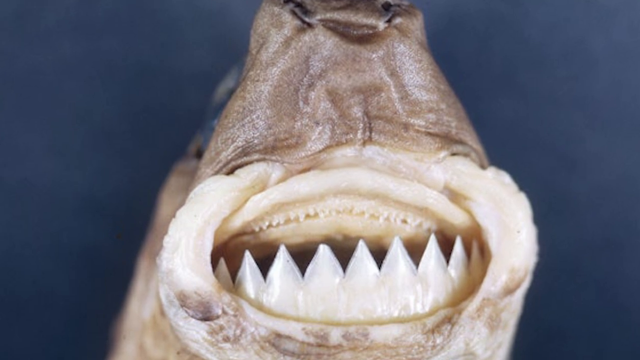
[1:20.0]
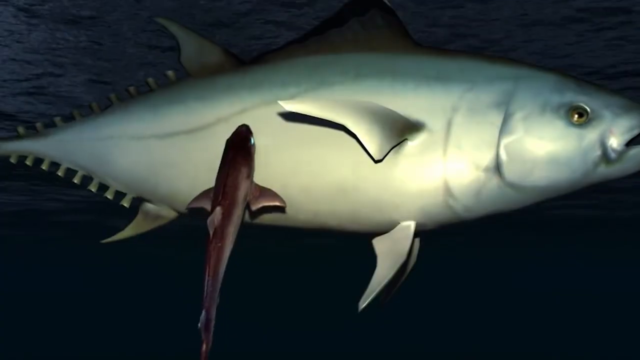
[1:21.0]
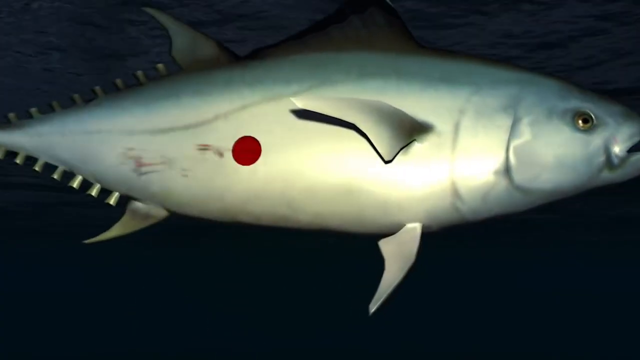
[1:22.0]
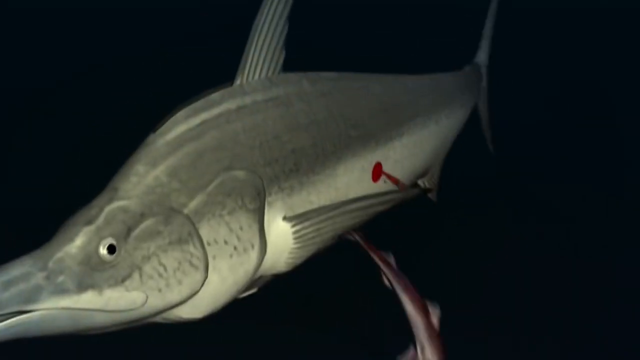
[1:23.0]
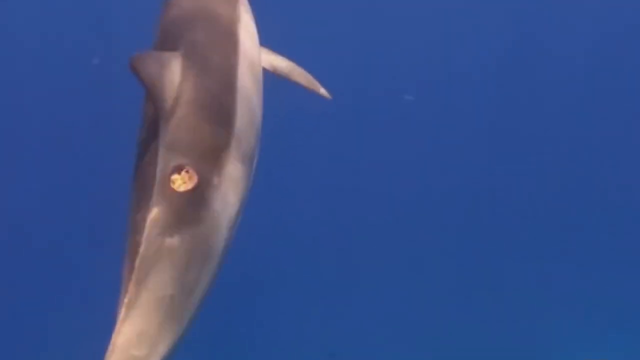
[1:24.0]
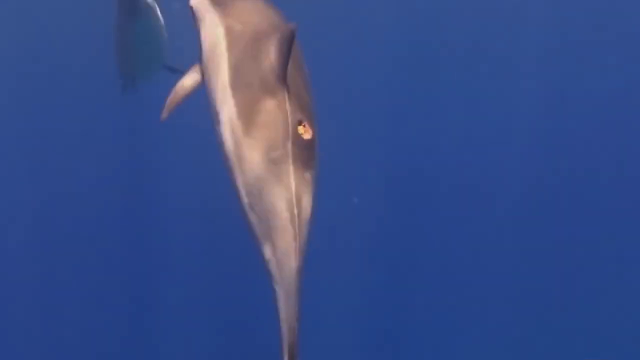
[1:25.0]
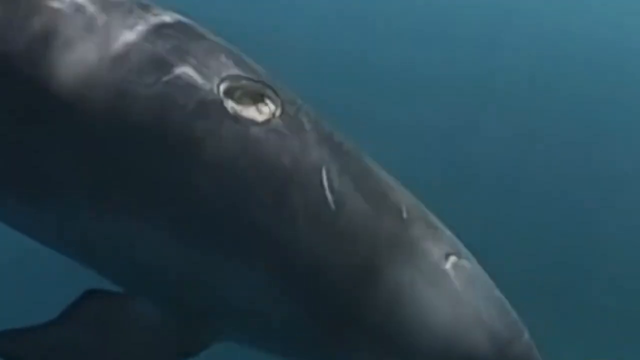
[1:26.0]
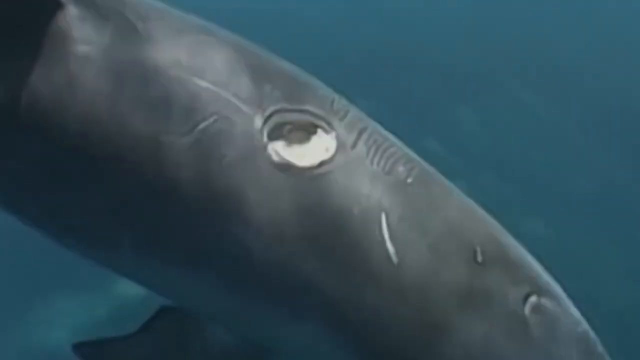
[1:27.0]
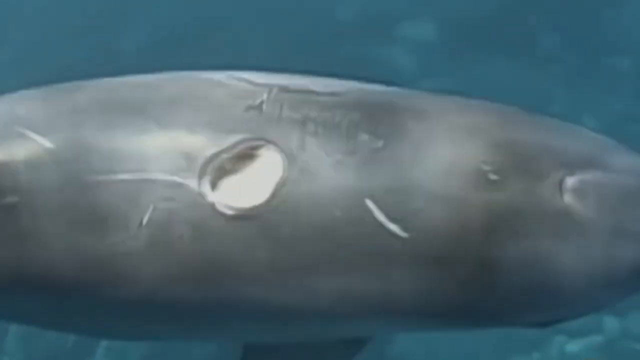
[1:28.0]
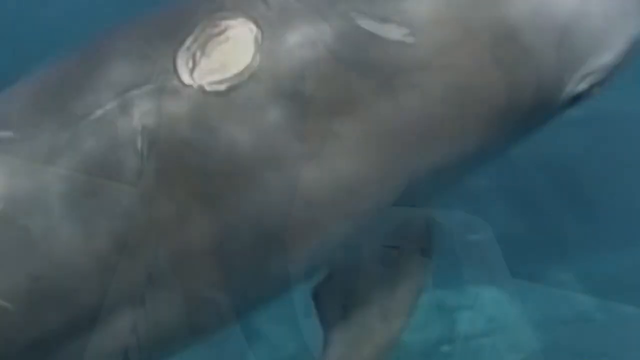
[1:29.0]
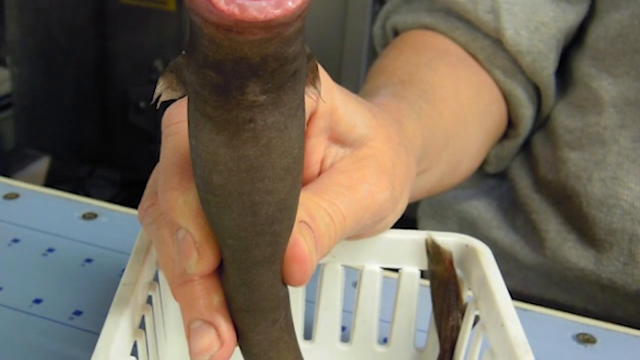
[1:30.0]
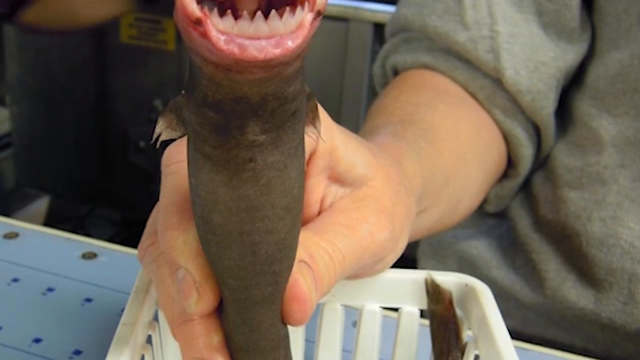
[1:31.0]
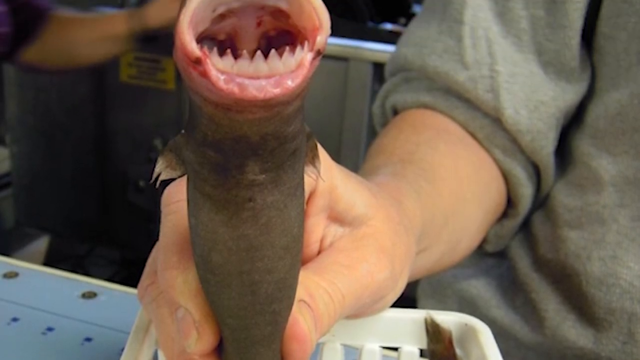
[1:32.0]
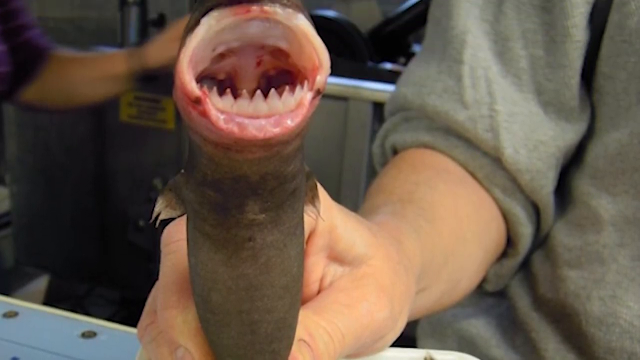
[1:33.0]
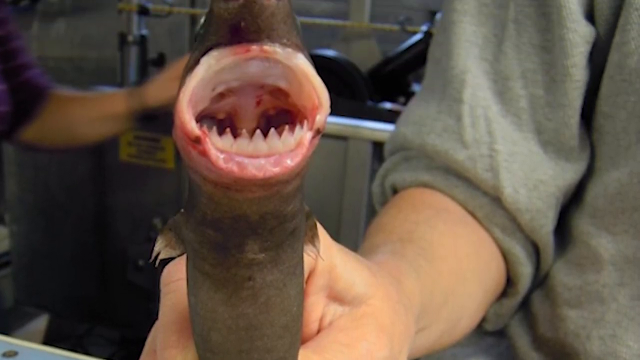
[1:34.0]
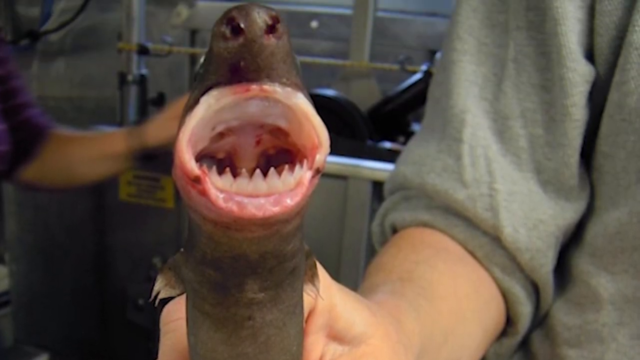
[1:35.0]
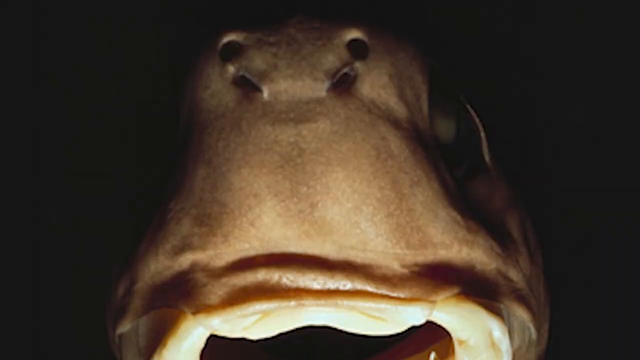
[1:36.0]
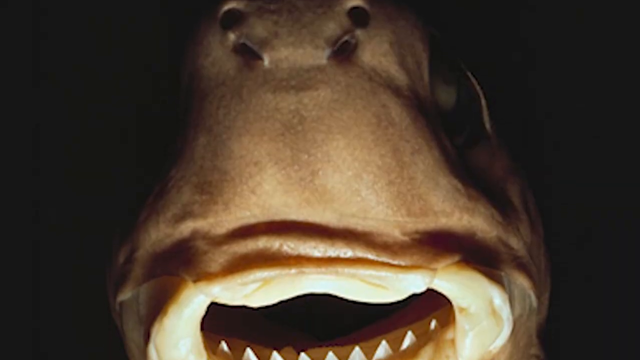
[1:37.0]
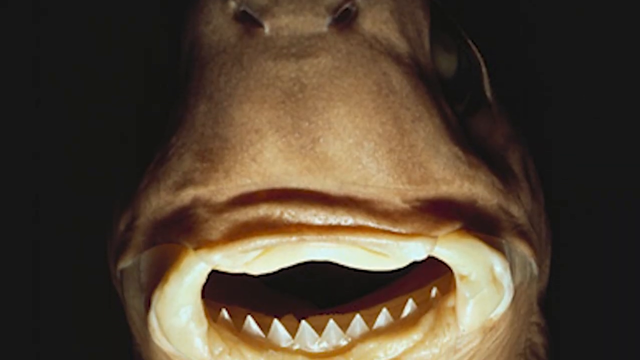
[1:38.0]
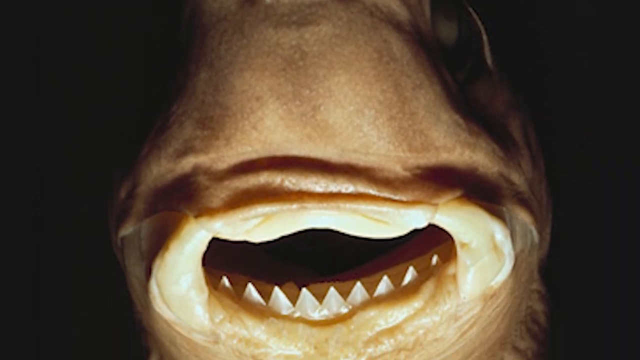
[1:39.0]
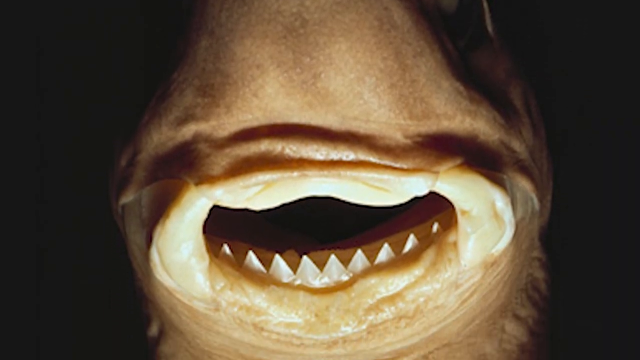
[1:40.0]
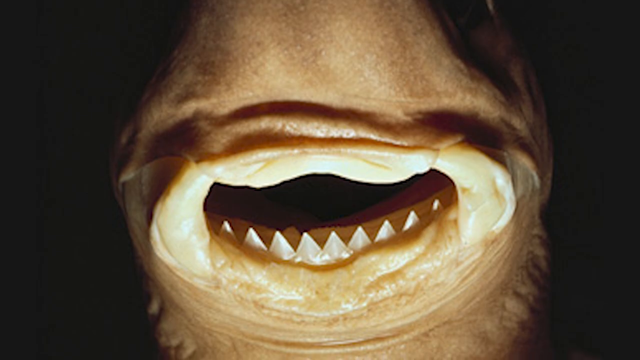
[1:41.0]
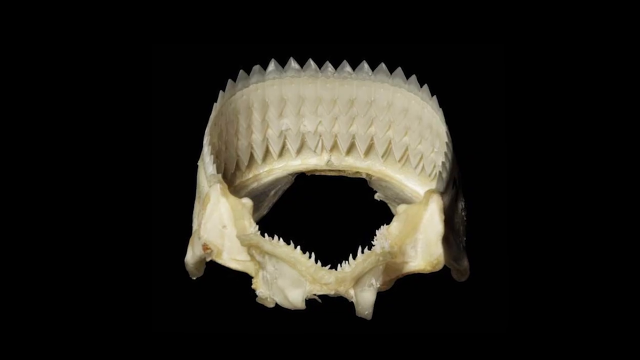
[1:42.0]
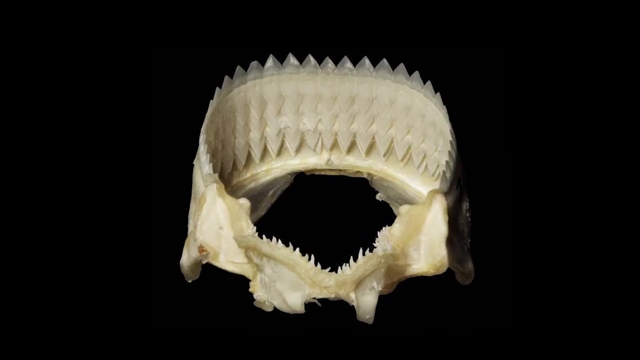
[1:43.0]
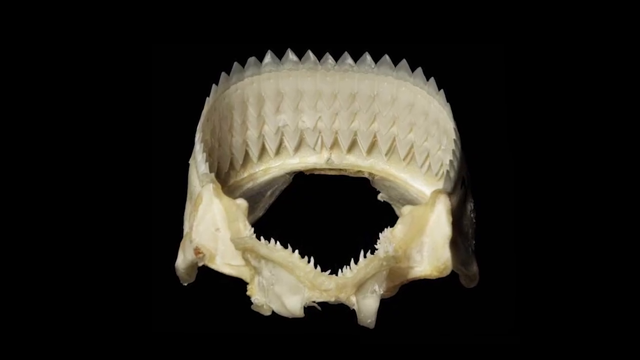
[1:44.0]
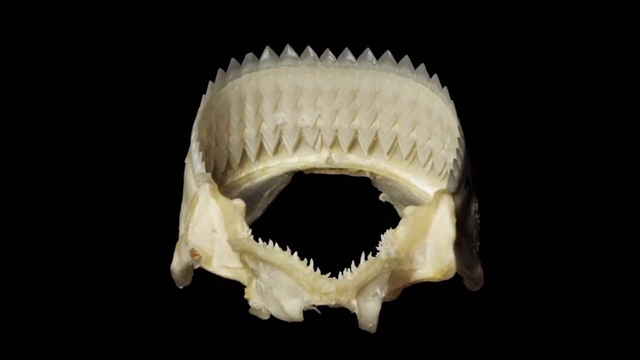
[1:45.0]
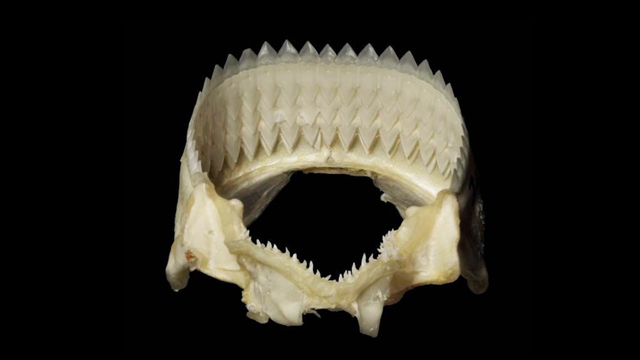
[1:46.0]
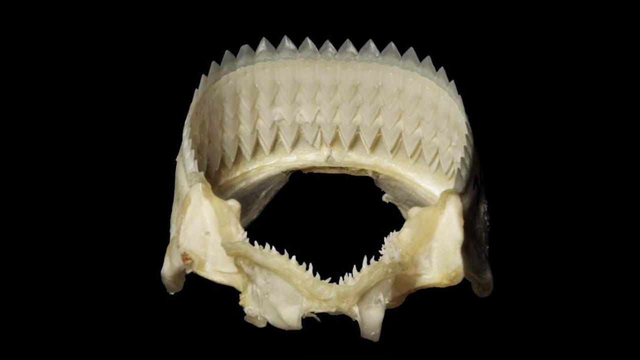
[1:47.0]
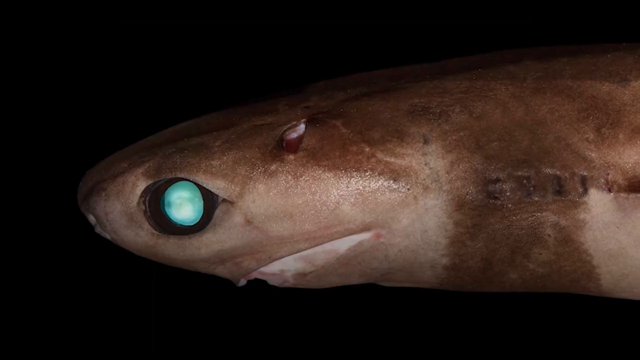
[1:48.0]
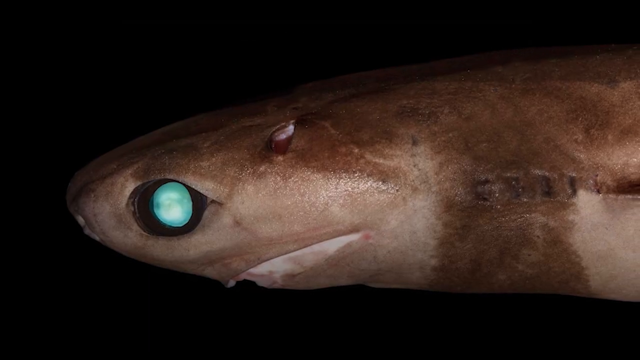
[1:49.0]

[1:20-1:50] Entry holes, possibly made by these fish on dolphins and other animals, are shown, with blood leaking out. The top row of the fish's teeth seems very small and different from the bottom row.